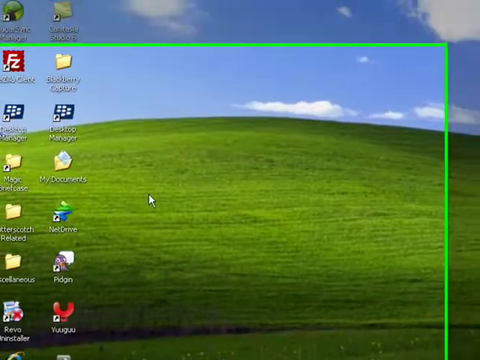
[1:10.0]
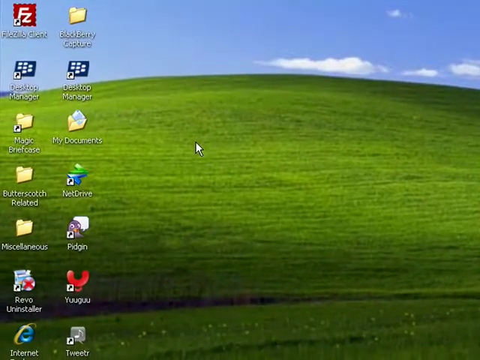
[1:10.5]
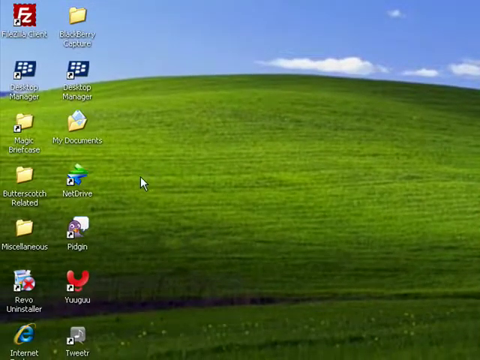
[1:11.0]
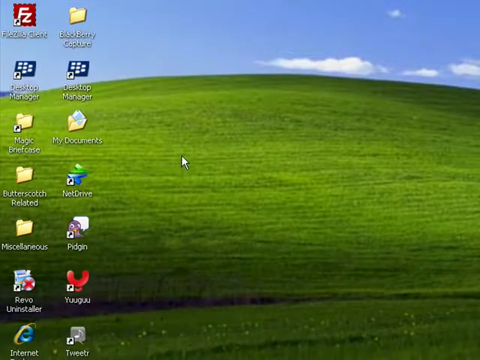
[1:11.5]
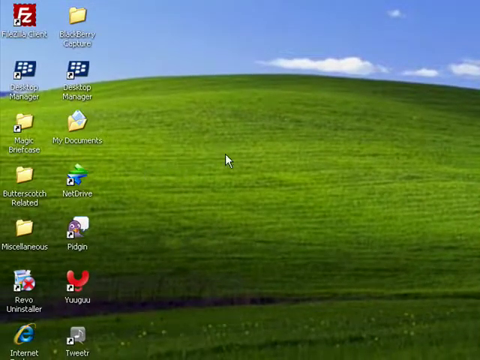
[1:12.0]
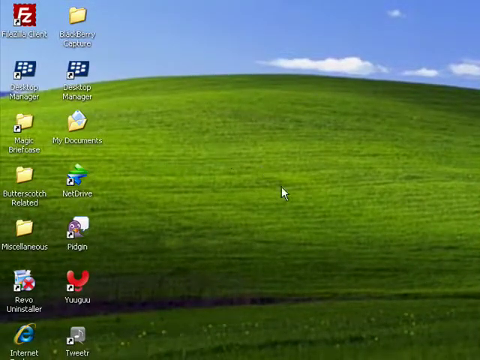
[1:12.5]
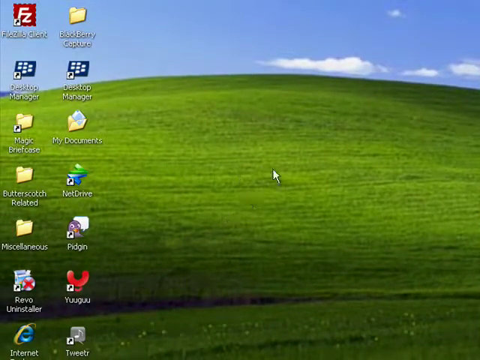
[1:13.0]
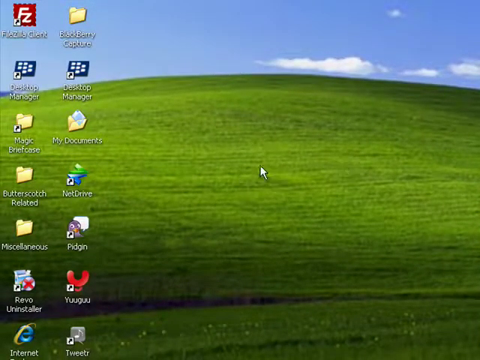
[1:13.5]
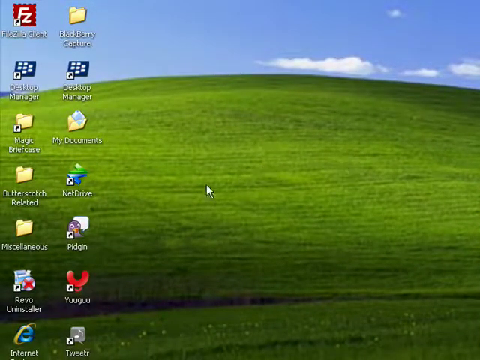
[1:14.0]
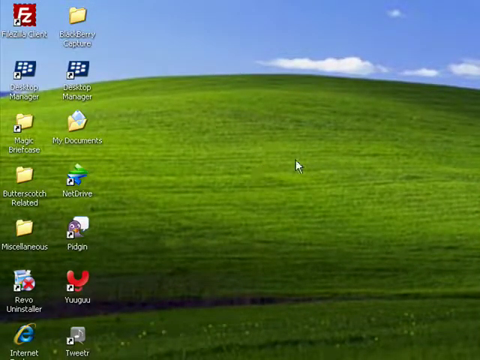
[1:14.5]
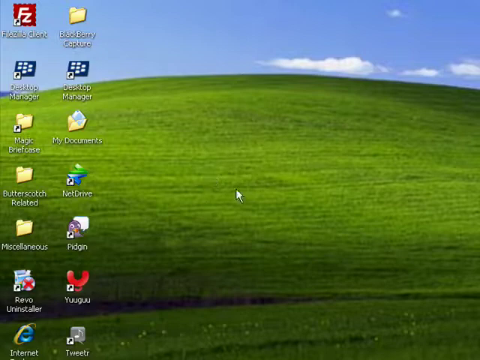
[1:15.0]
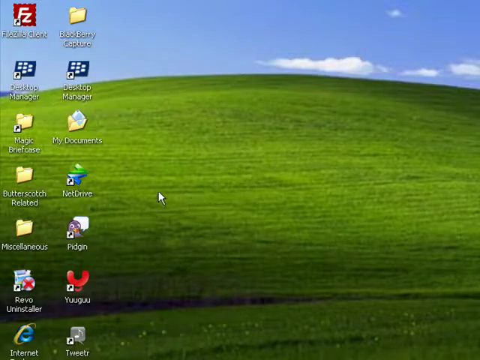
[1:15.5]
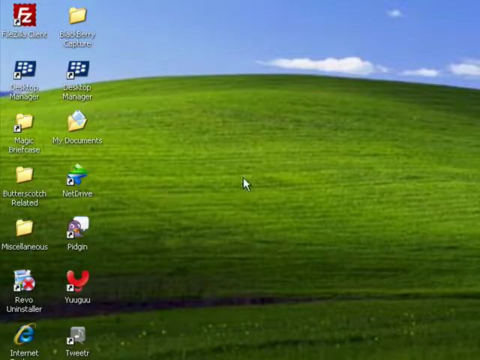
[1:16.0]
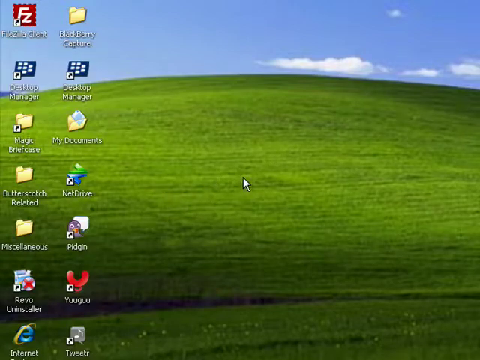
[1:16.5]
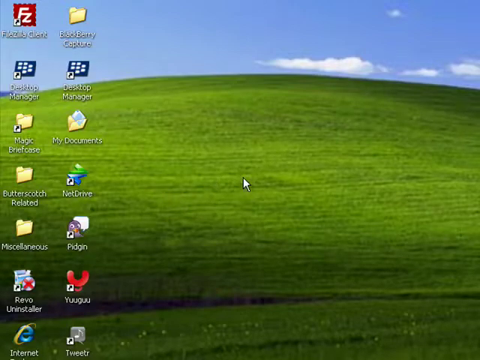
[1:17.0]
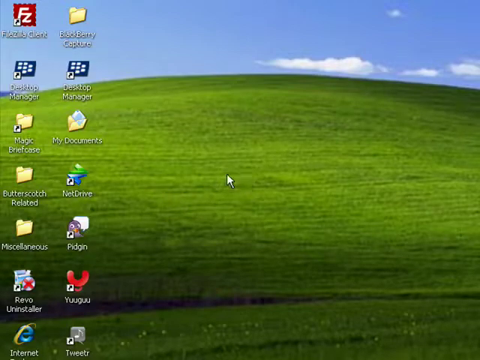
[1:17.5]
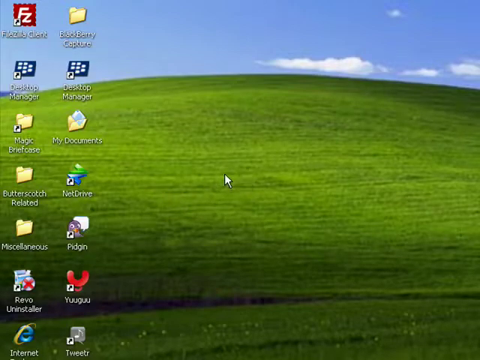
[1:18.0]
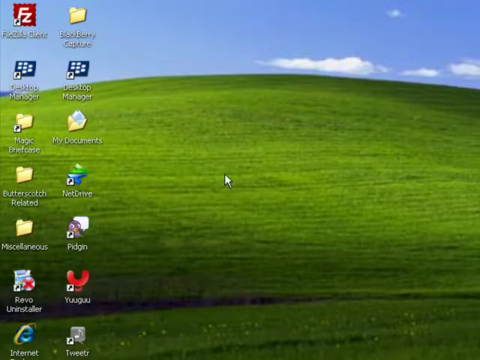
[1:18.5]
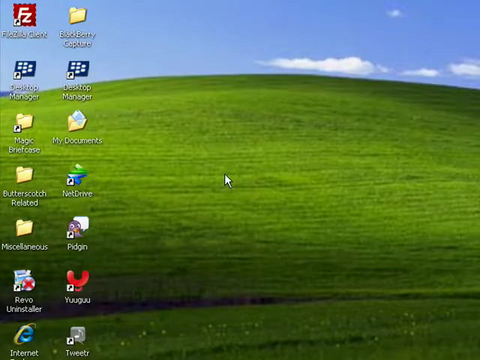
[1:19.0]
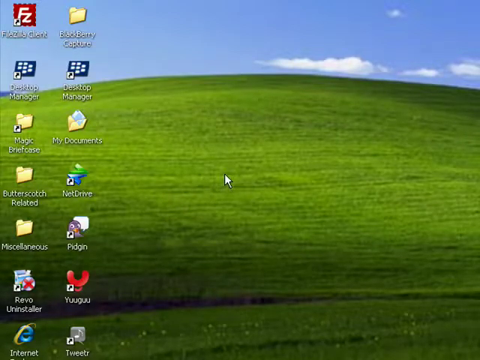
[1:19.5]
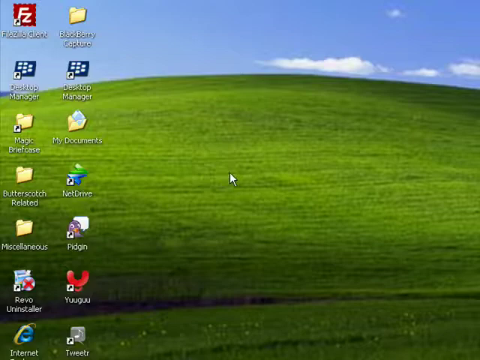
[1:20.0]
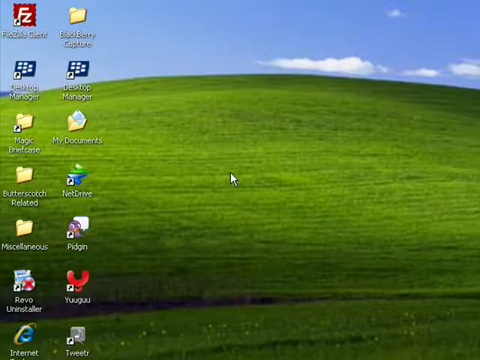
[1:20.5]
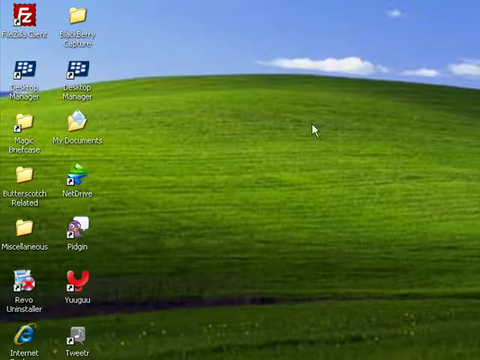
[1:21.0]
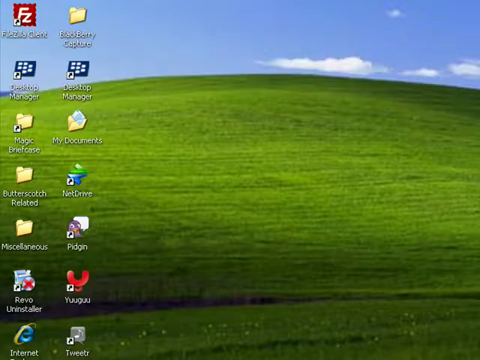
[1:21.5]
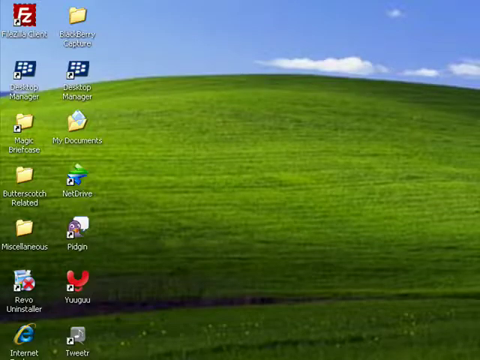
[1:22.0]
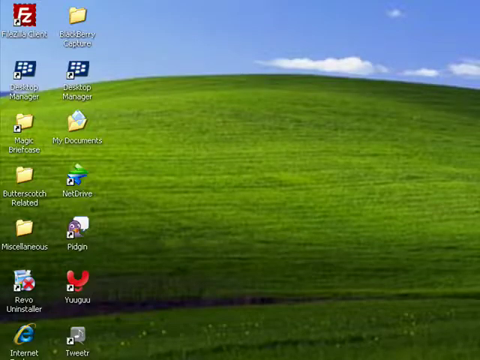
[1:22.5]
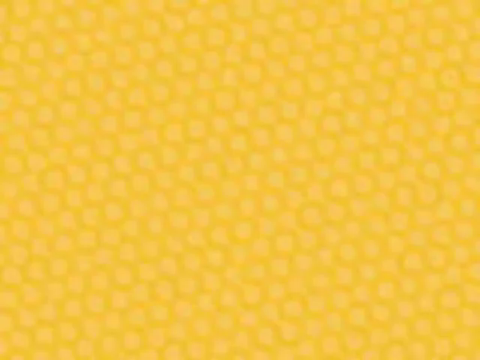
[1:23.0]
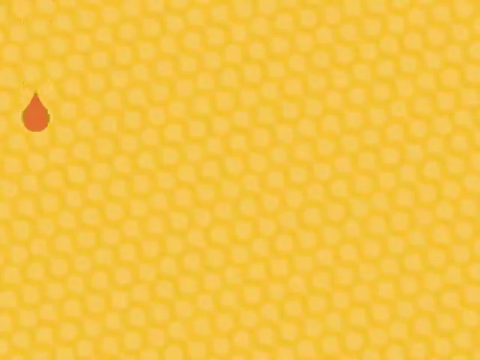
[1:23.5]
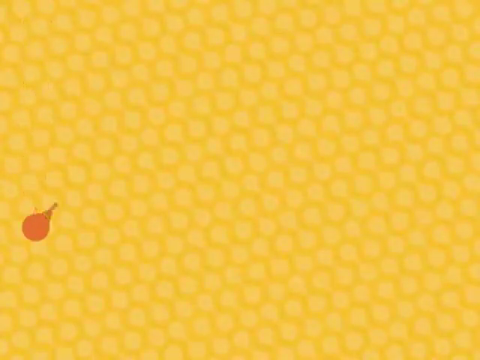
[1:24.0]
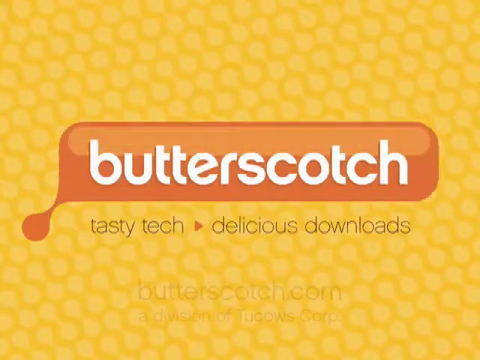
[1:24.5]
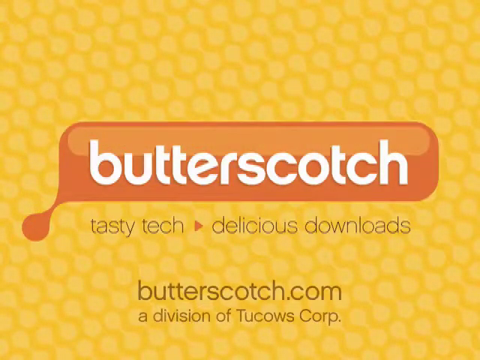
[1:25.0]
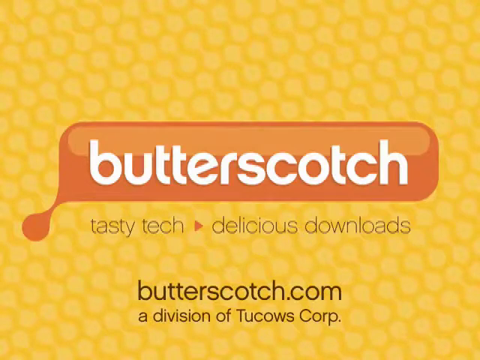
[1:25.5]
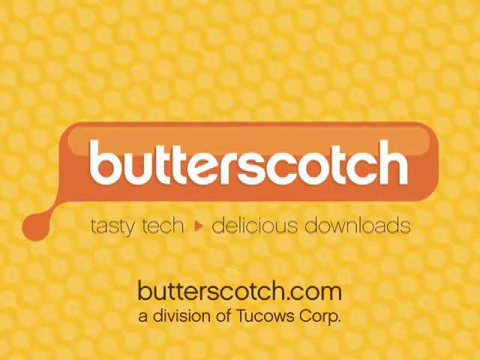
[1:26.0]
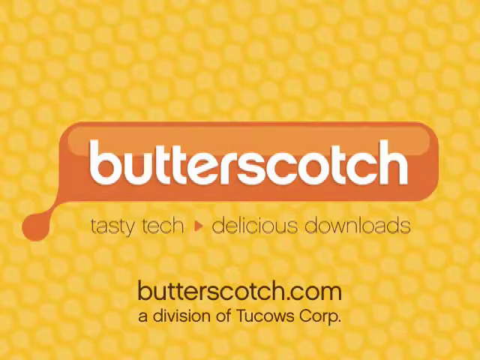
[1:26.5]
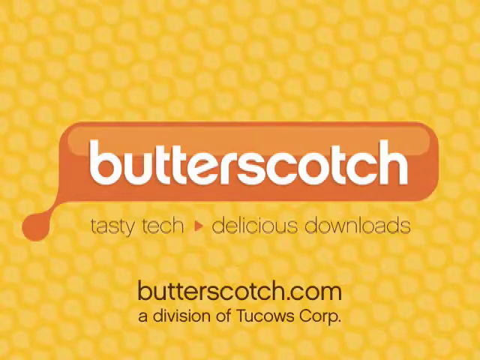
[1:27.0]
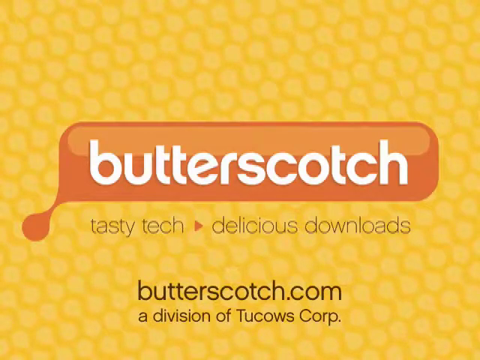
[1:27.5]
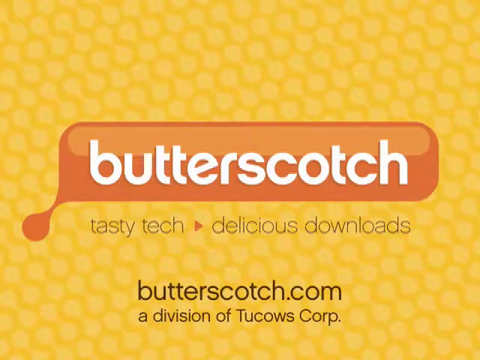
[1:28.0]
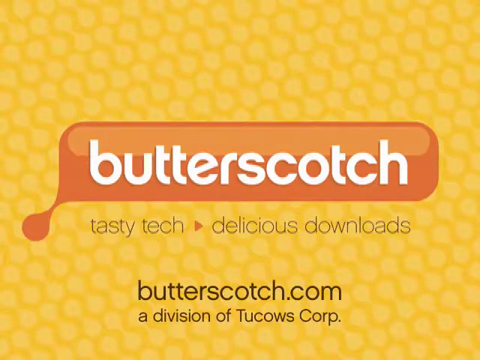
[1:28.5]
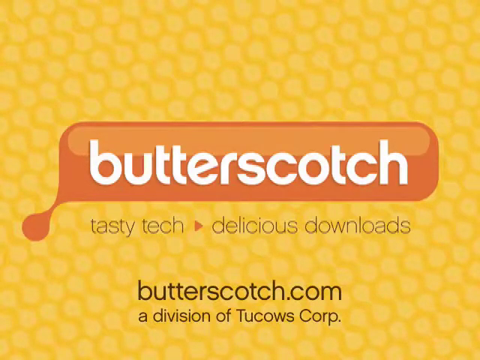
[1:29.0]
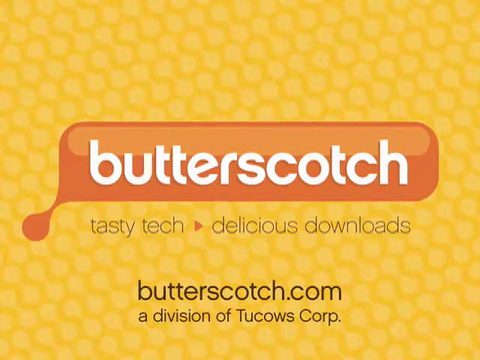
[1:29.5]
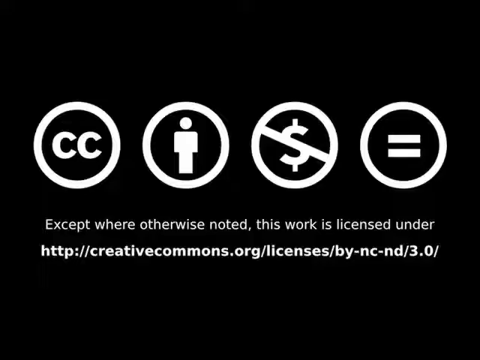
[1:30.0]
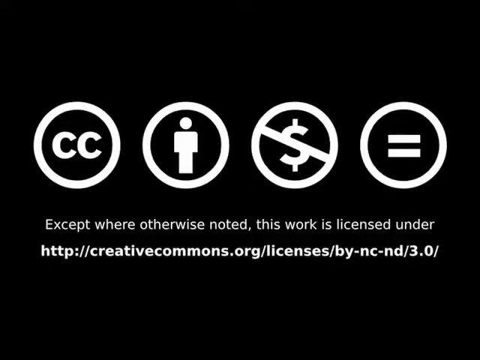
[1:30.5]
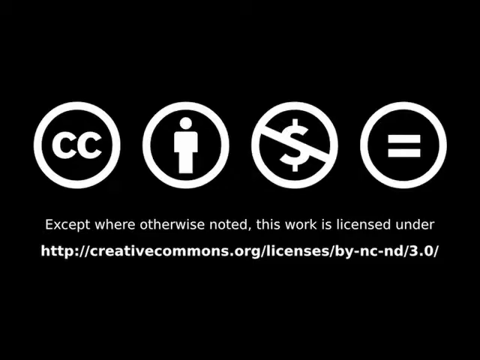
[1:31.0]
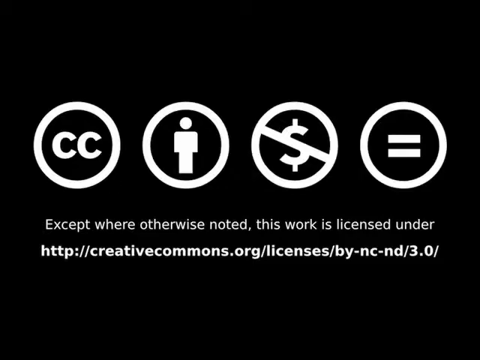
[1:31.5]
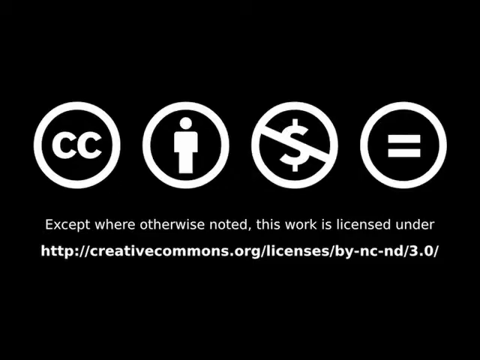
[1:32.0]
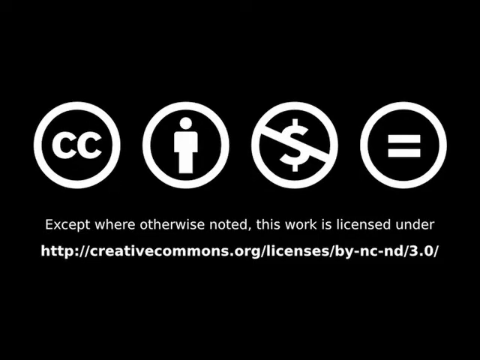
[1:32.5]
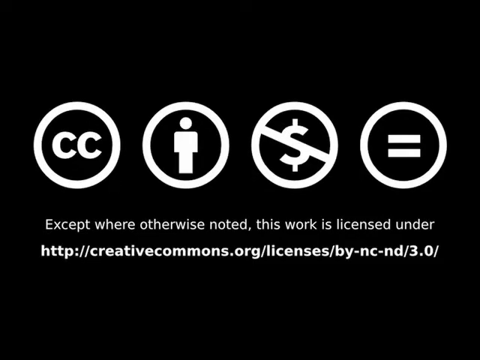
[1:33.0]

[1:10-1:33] The main Windows desktop is shown on top of a different, black and white desktop. The Windows desktop then grows to occupy the whole screen. The mouse is moved as before, in a jerky fashion, and then in more random ways, kind of in circles and back and forth, each time jumping from one location to another; this goes on a couple of times. The video then returns to the yellow honeycomb, with the orange drop falling and turning into an orange background with "butterscotch" in white on it. Text reads "tasty tech, delicious downloads, butterscotch.com, a division of twocows.corp". A final black screen states that, except where otherwise noted, the content is covered by Creative Commons.